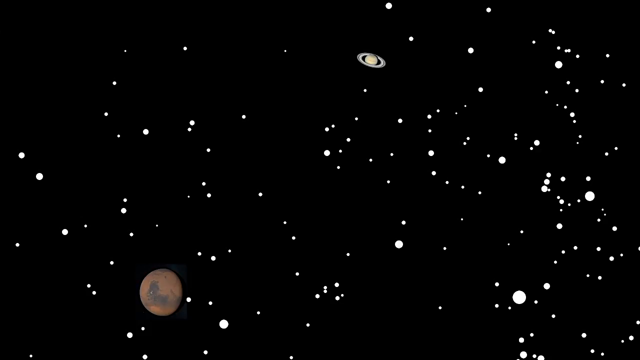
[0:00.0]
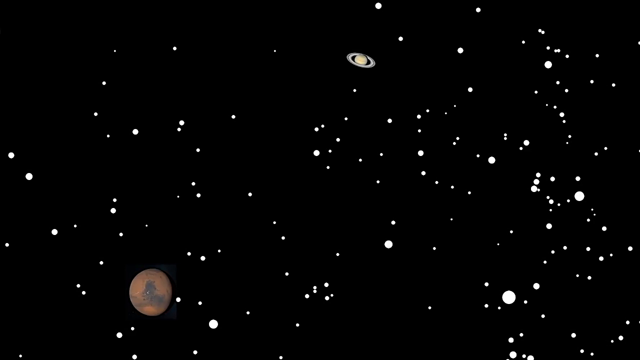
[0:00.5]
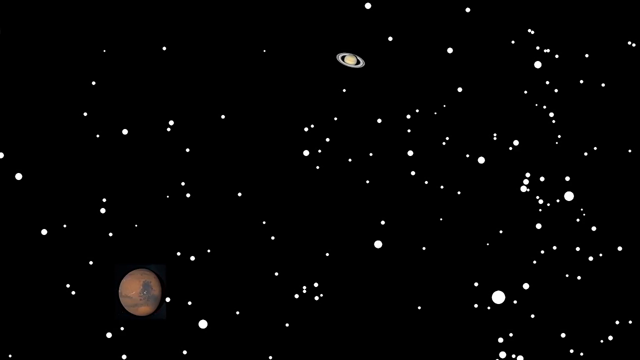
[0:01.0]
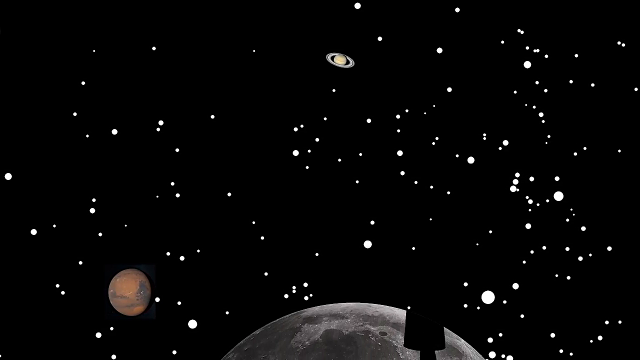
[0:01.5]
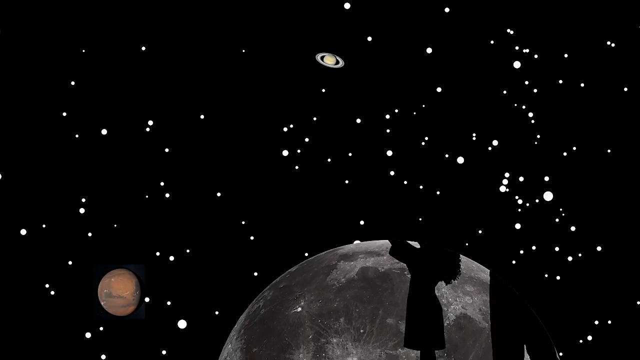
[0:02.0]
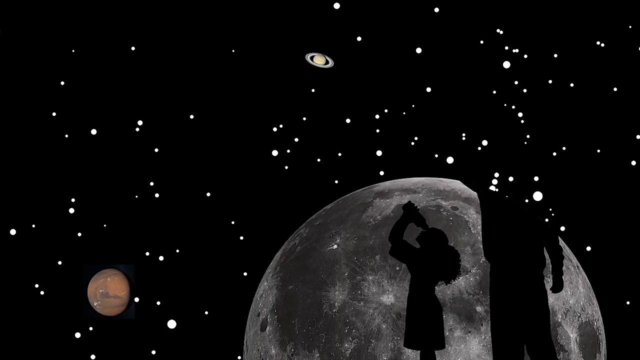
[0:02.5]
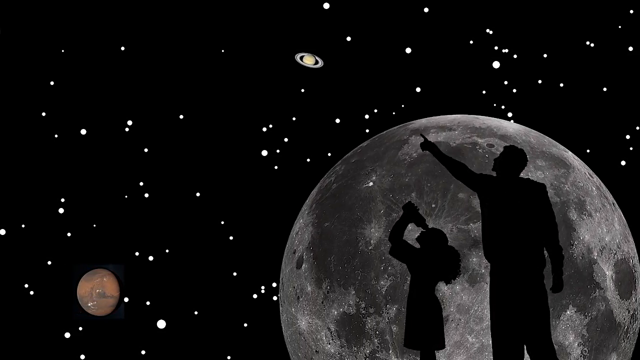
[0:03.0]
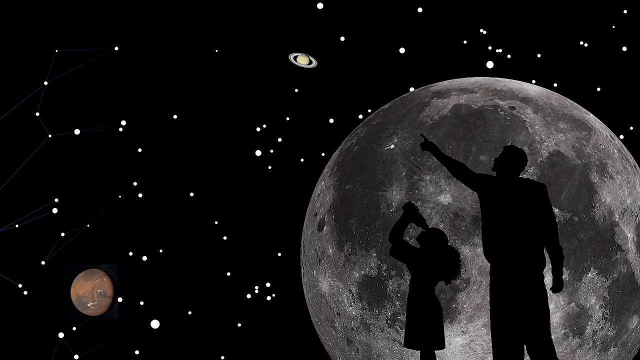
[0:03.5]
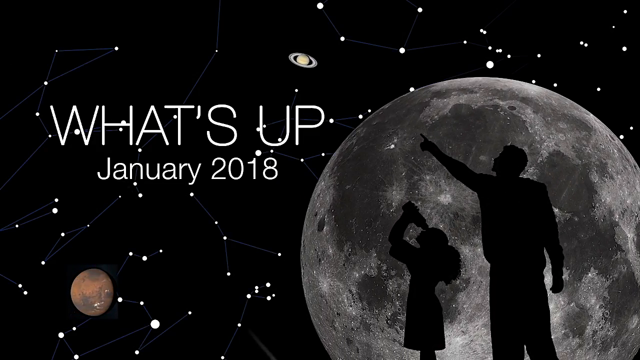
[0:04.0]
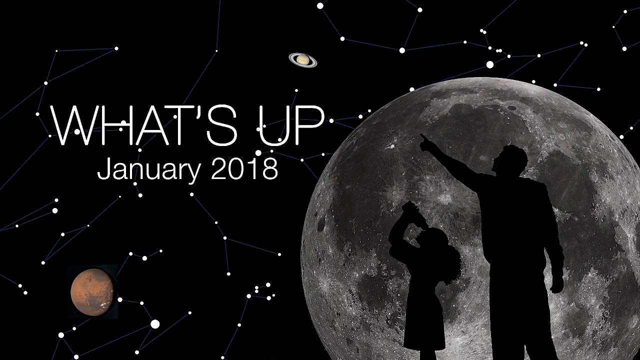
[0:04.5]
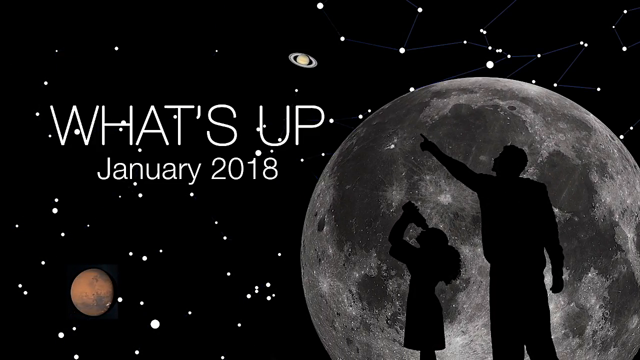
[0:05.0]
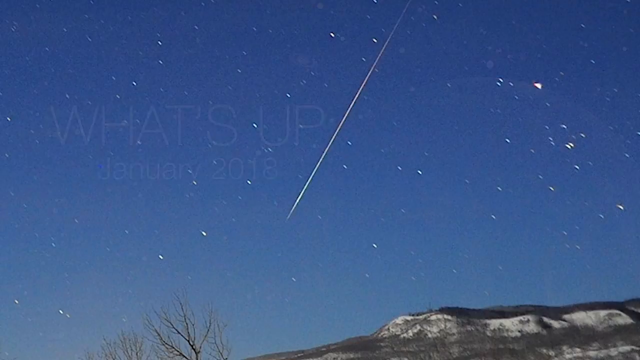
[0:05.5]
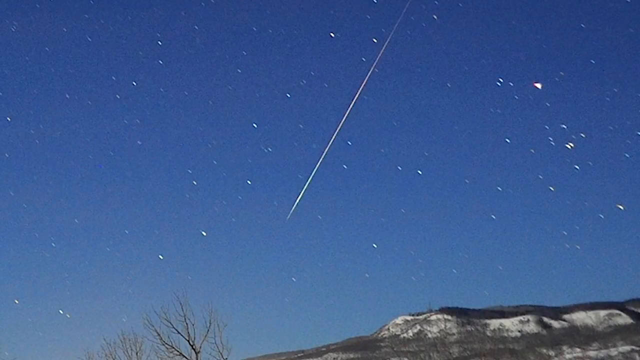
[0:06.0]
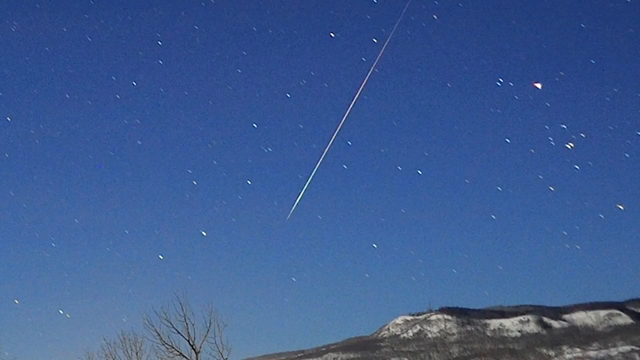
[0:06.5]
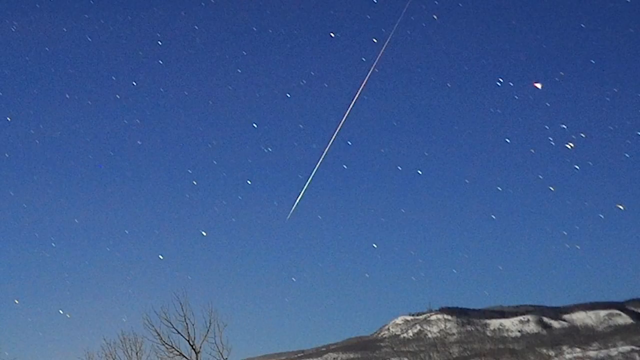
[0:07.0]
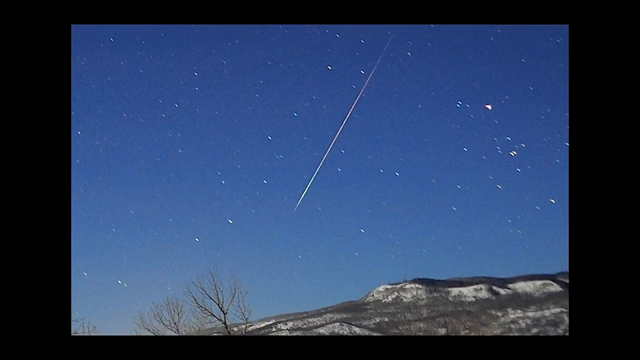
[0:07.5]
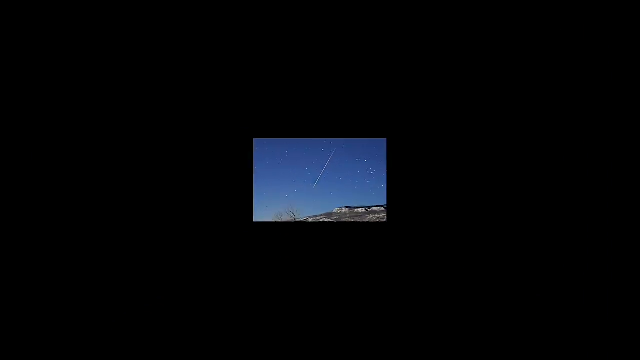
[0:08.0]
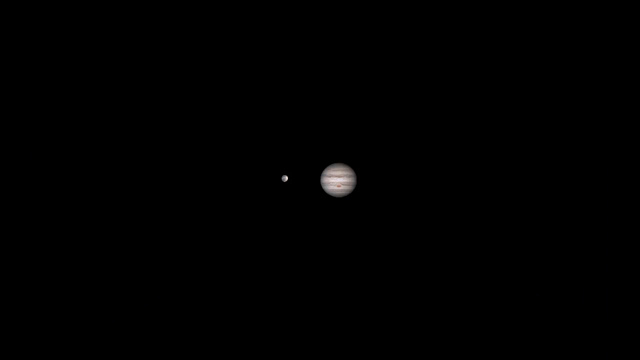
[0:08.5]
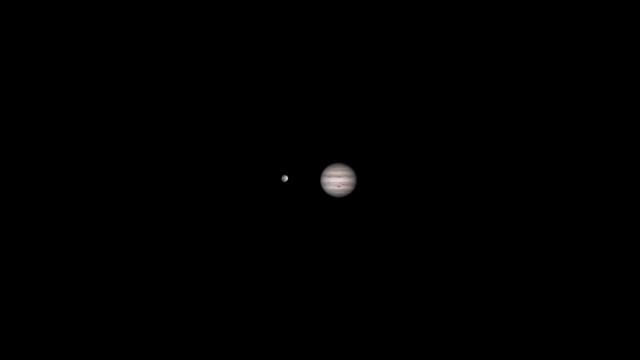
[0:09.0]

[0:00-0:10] An artist's rendition of the sky shows planets, including Mars and Jupiter, and a bunch of stars. In the lower right, a large body slides onto the screen from the bottom to the middle; it may be the Earth or the moon. The silhouettes of a father and his daughter are seen standing in front of it, pointing up towards the moon. Text appears on the screen reading "What's up, January 2018." The video then transitions to what looks like a satellite shooting through space, though it could also be a falling star, at what looks like dusk. The shot ends on a planet, possibly Mars or maybe Venus, with a bunch of stars. The stars and planets are an artist's drawing or creation.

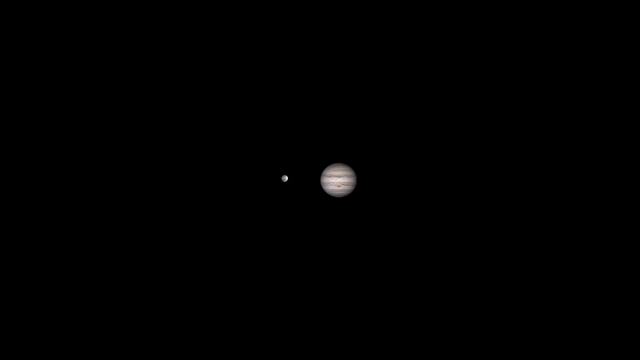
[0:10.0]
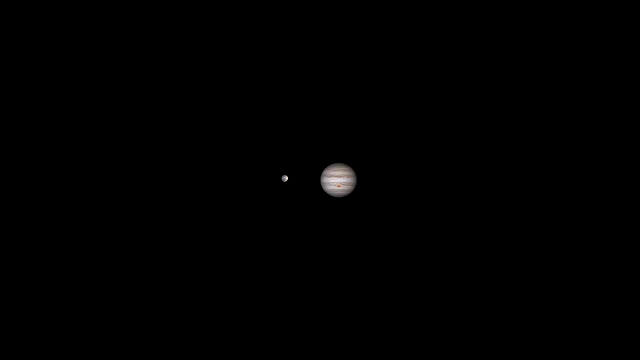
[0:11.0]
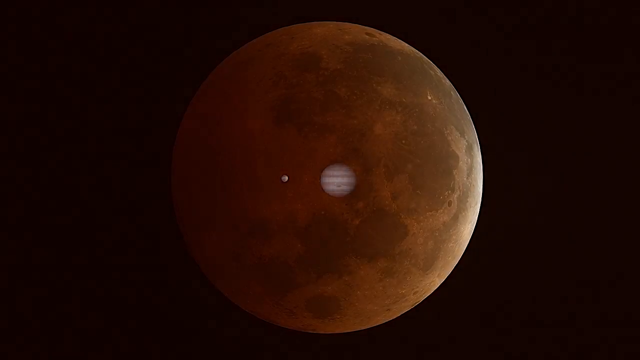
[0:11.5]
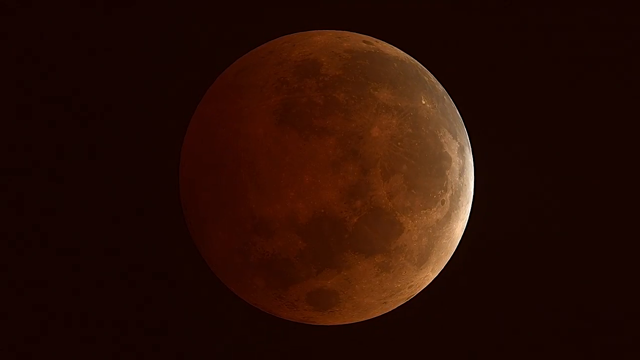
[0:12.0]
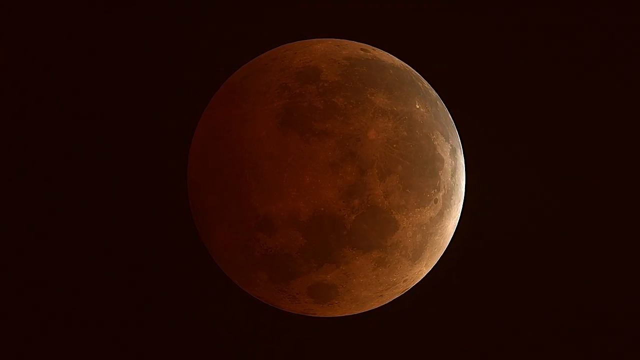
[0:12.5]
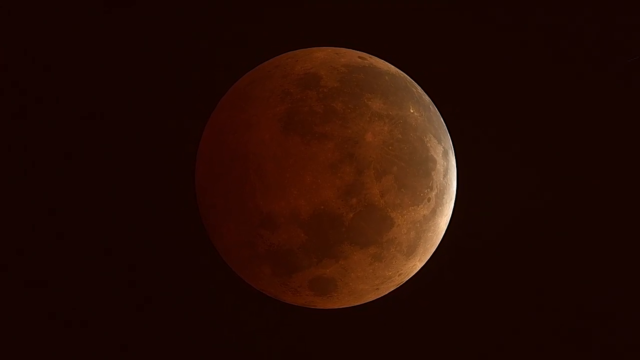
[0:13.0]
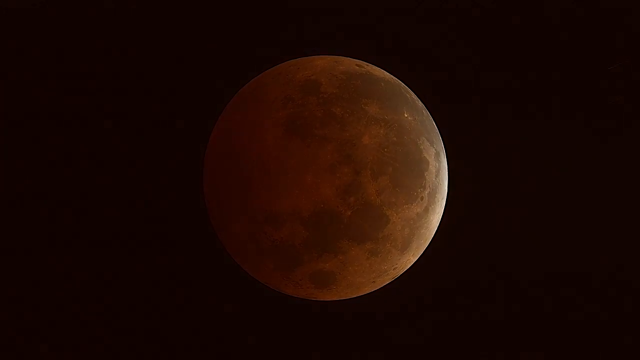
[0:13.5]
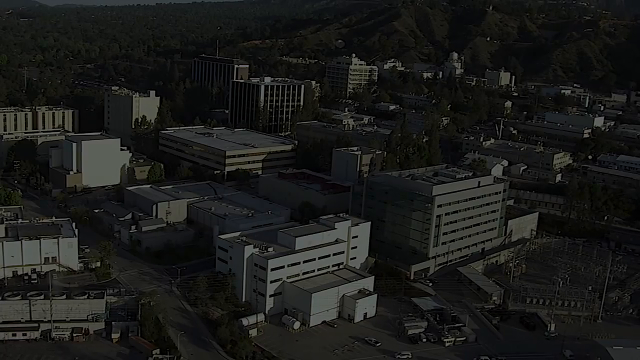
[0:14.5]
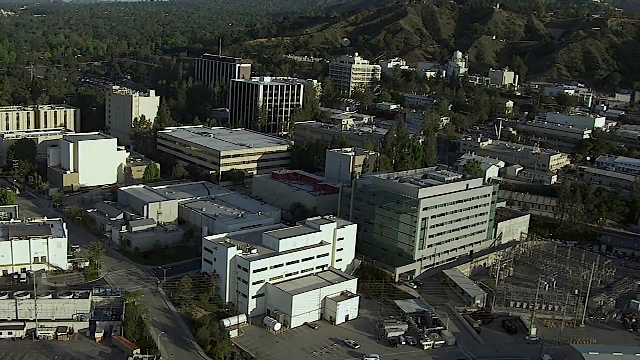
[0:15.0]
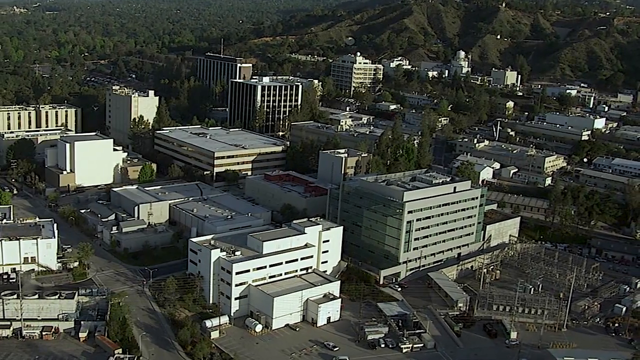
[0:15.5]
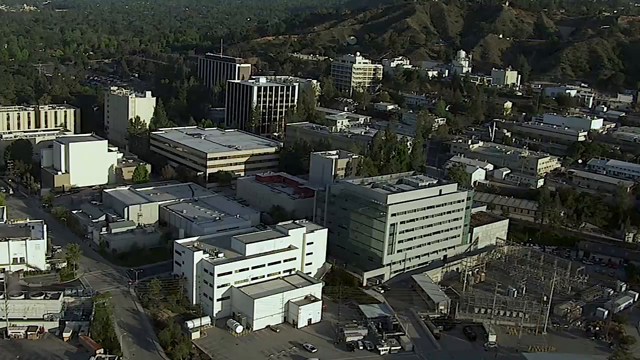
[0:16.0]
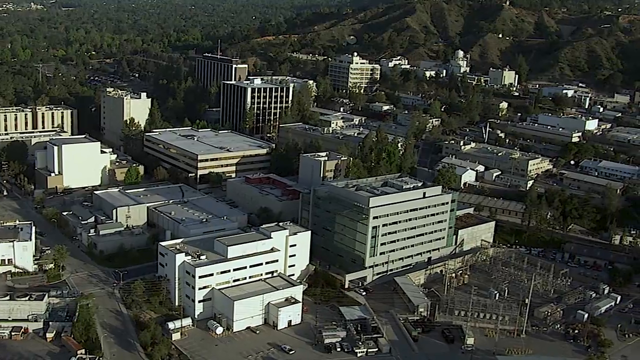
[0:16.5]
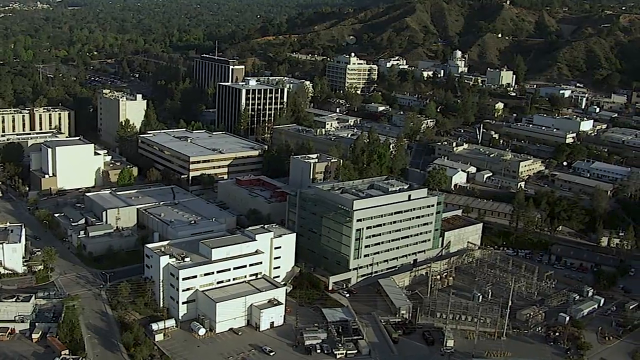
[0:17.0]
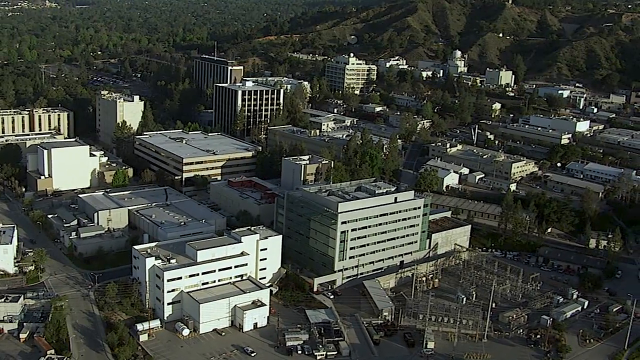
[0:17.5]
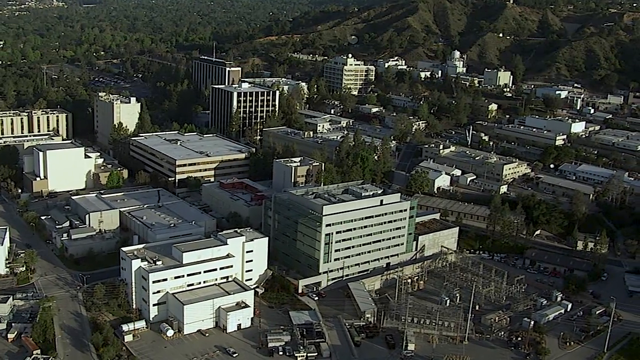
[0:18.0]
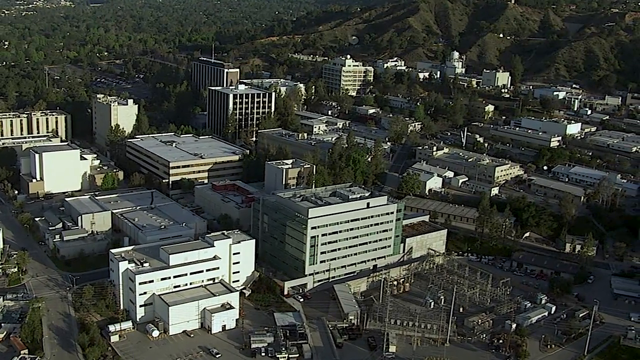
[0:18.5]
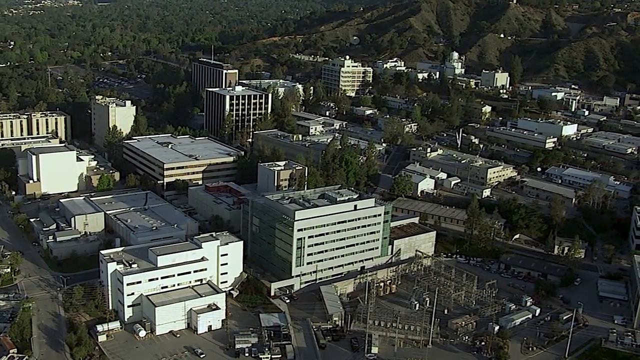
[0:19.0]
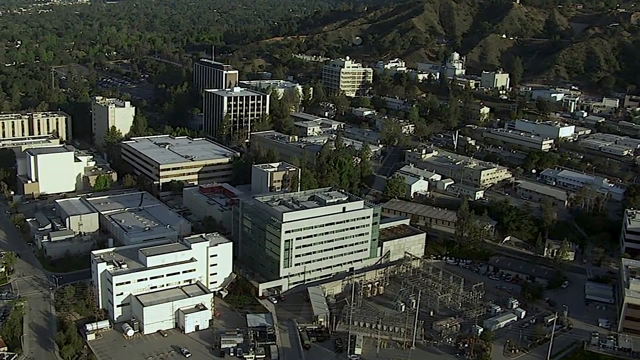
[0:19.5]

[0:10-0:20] The video opens on a planet that appears to be Mars, with a tiny planet to its left, apparently Venus. A larger planet then comes onto the screen that looks like the Earth's moon, with a kind of red-tinted color. Next comes a drone shot of a bunch of buildings on Earth that look like they are built in a valley, probably some type of office buildings spread throughout the area, forming a large office complex. The video also transitions back to the first screen, apparently Mars with Venus to its left.